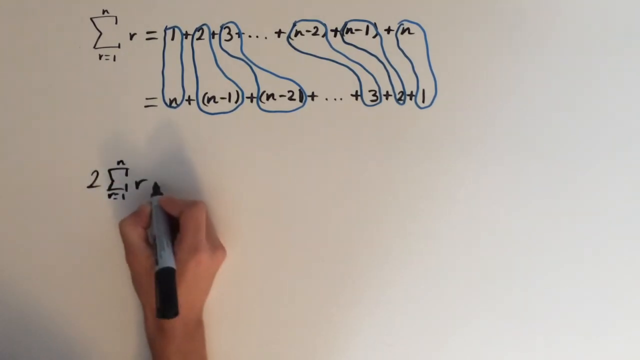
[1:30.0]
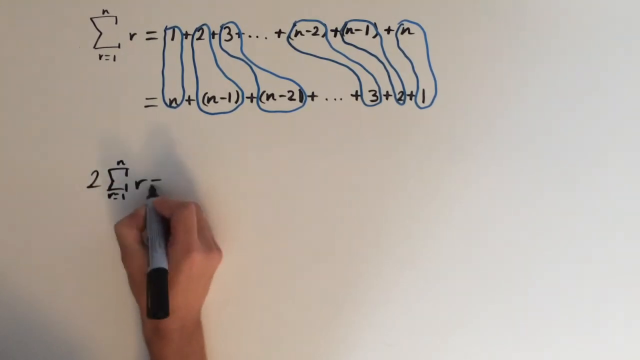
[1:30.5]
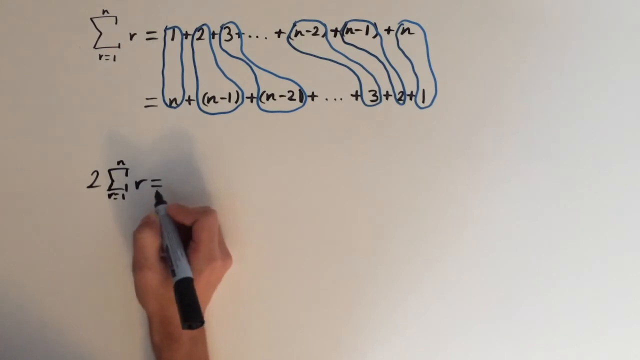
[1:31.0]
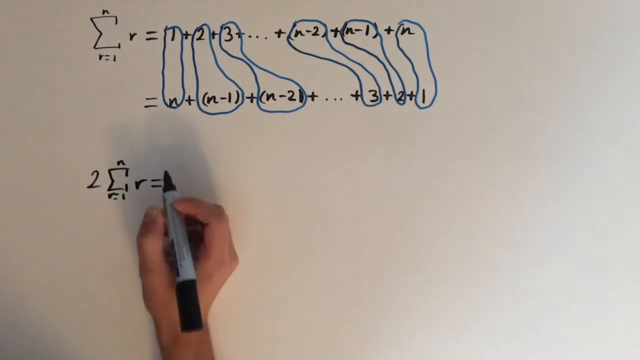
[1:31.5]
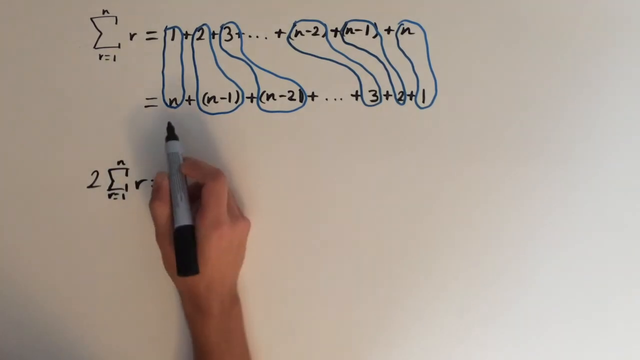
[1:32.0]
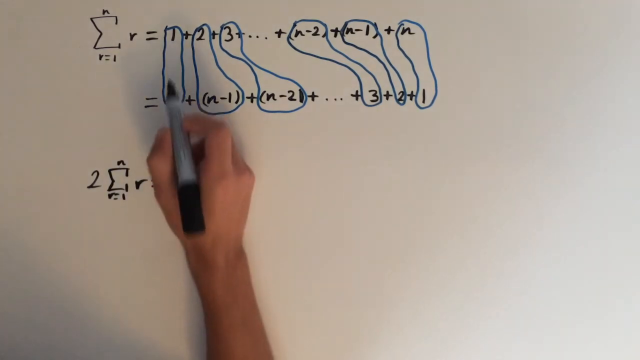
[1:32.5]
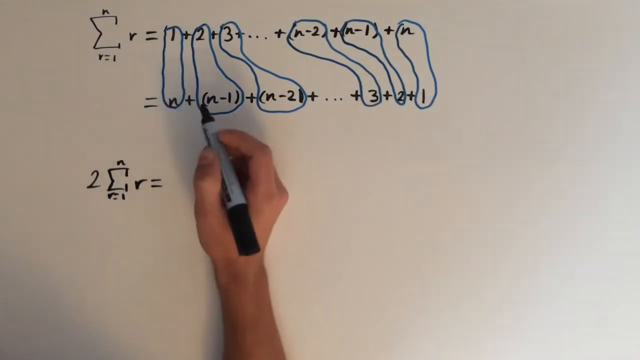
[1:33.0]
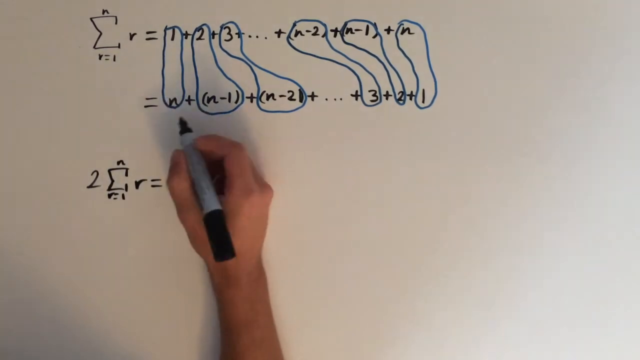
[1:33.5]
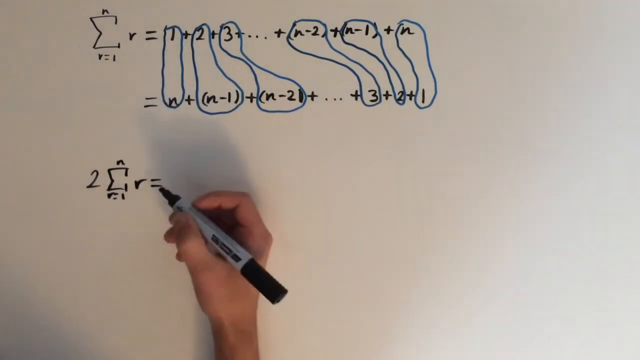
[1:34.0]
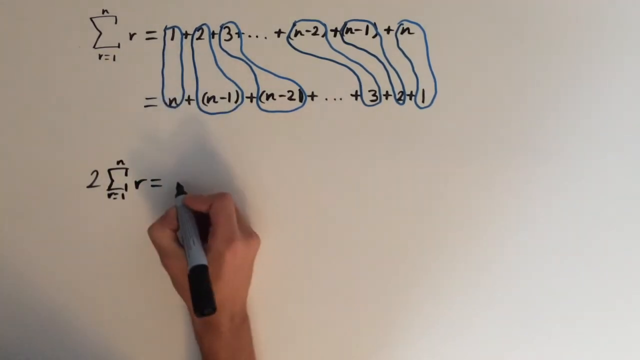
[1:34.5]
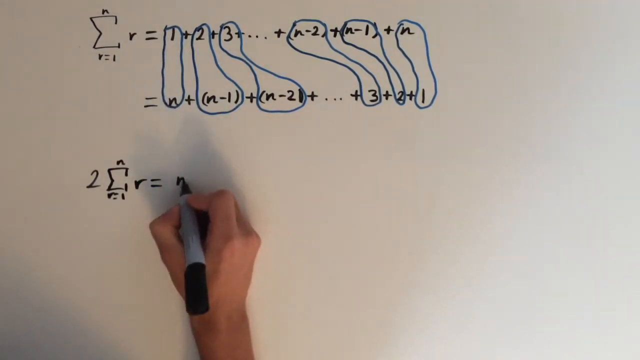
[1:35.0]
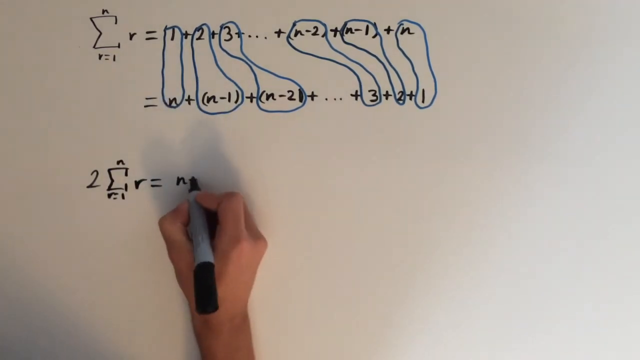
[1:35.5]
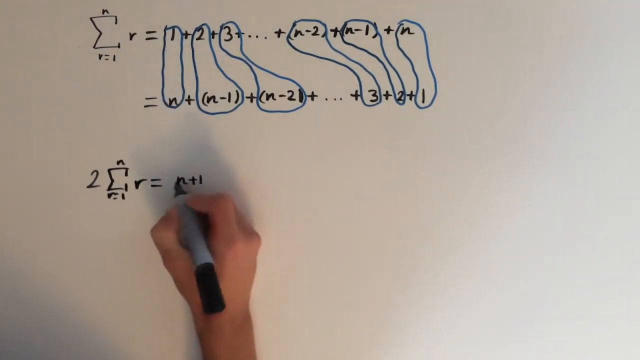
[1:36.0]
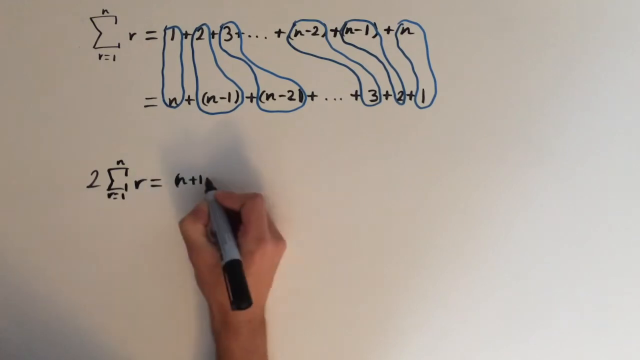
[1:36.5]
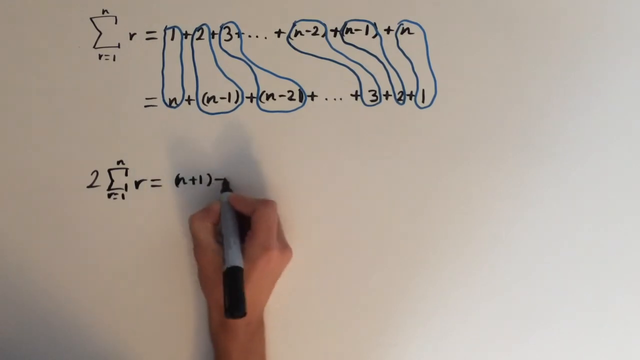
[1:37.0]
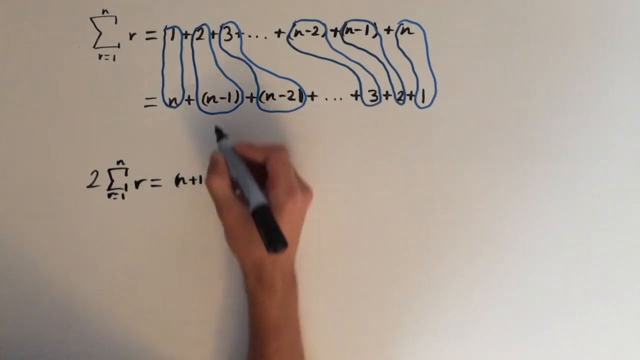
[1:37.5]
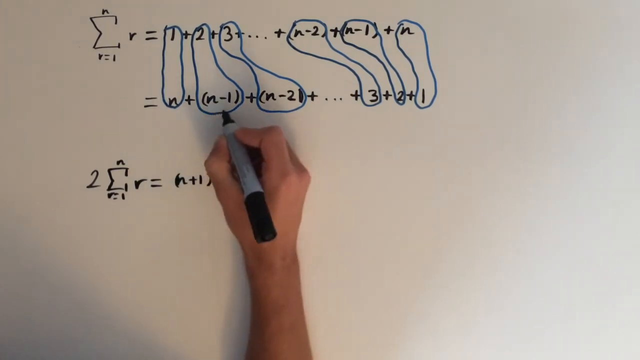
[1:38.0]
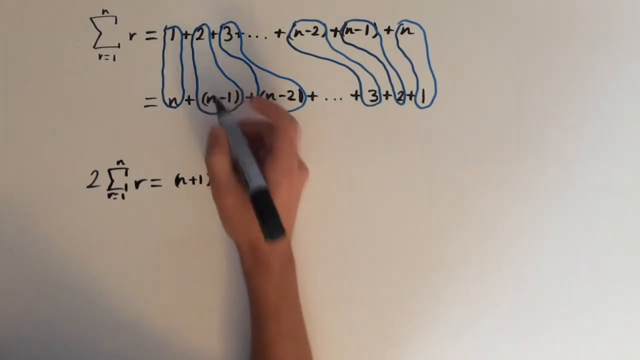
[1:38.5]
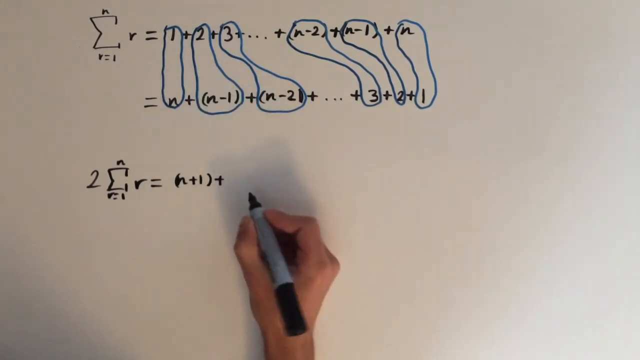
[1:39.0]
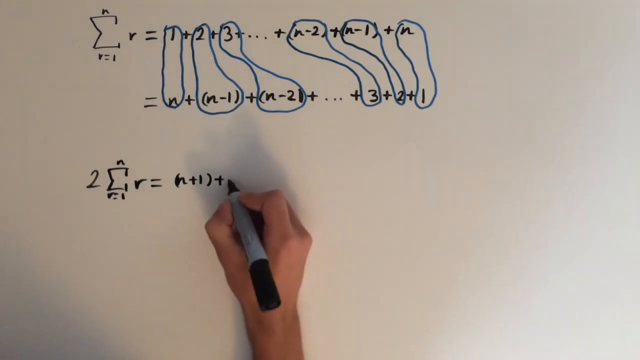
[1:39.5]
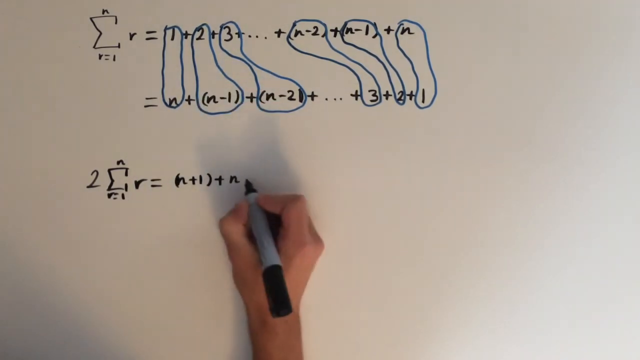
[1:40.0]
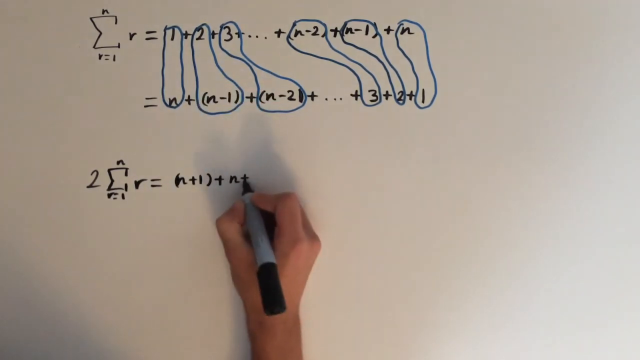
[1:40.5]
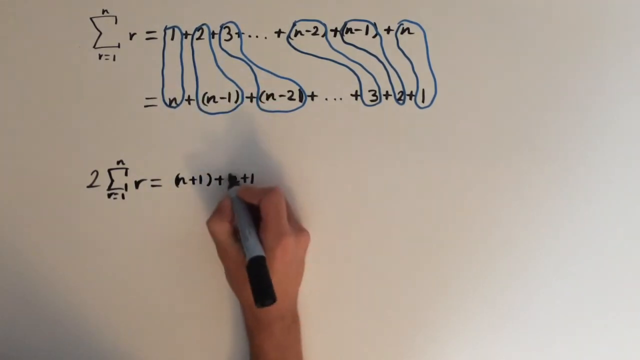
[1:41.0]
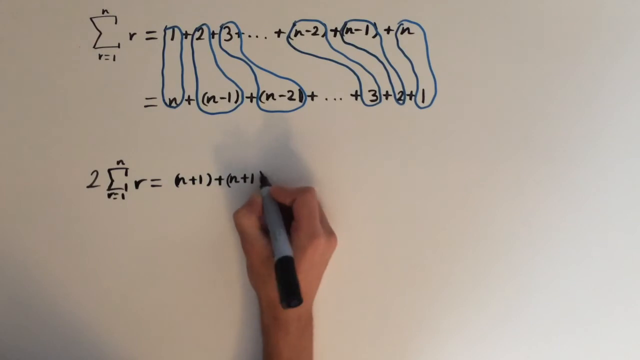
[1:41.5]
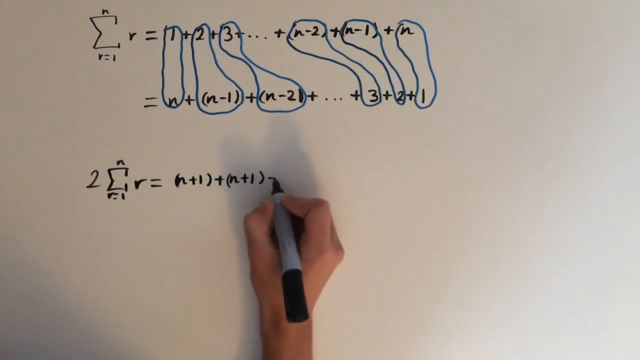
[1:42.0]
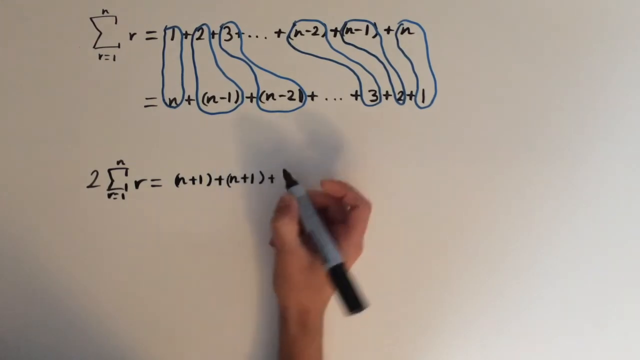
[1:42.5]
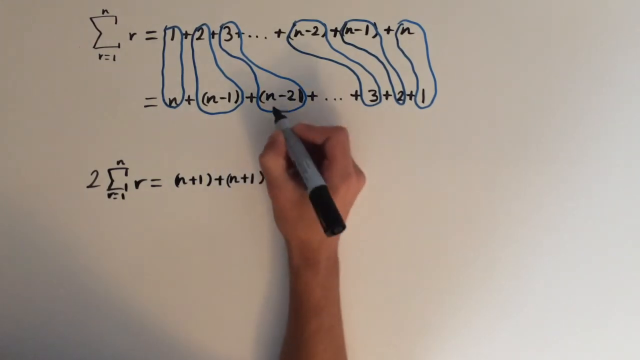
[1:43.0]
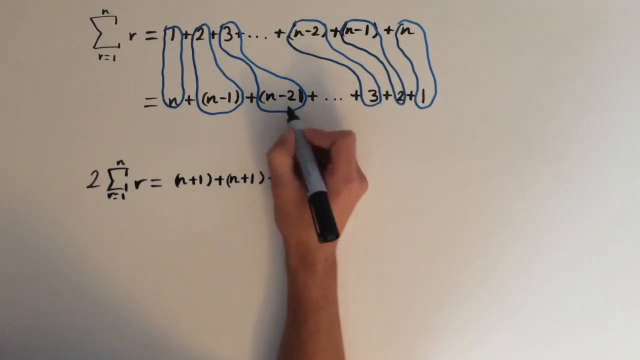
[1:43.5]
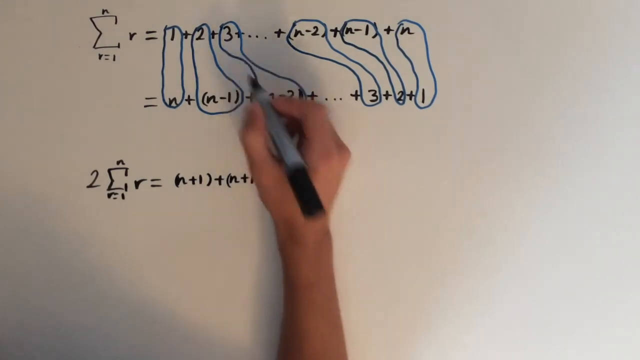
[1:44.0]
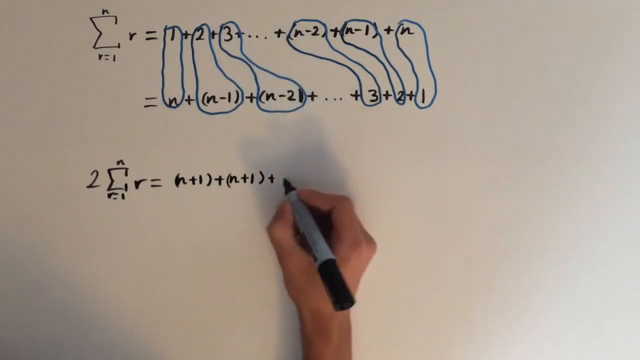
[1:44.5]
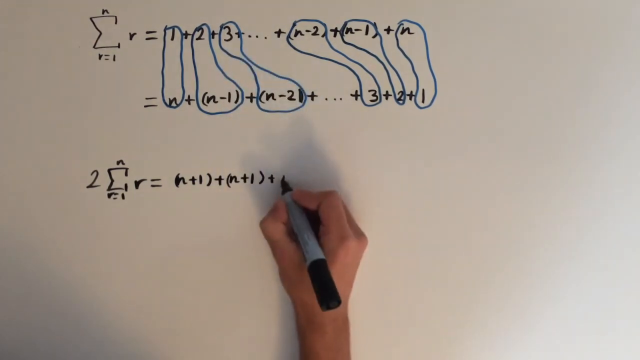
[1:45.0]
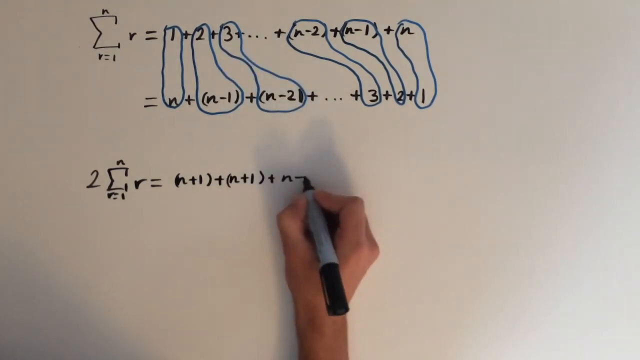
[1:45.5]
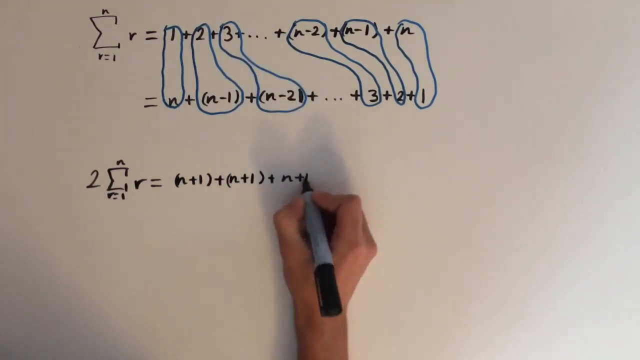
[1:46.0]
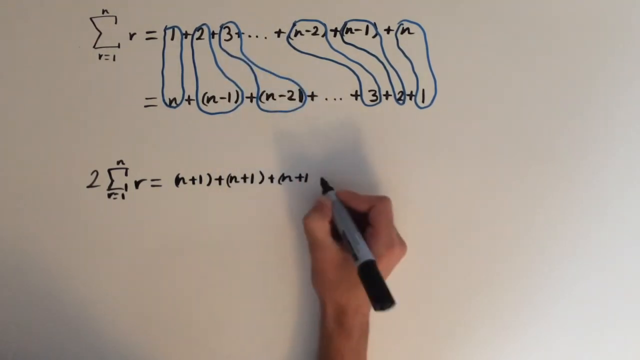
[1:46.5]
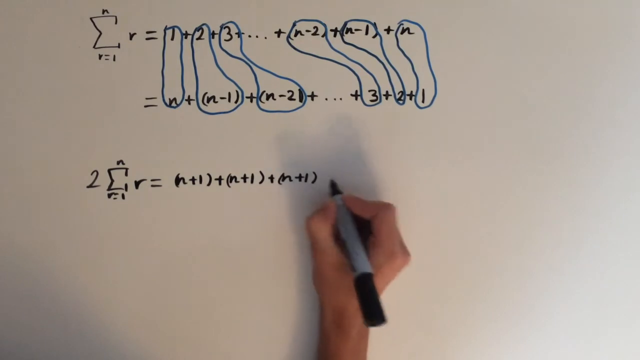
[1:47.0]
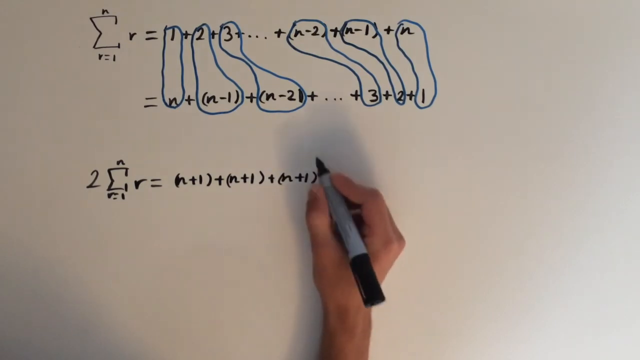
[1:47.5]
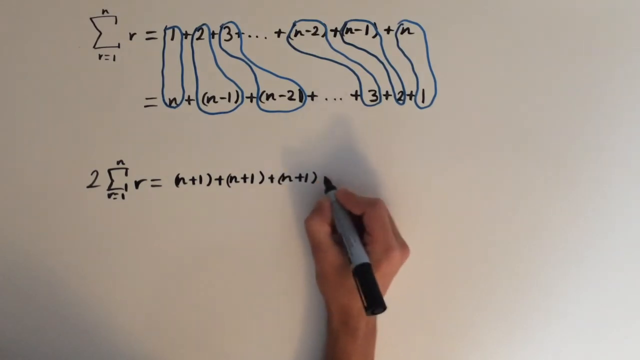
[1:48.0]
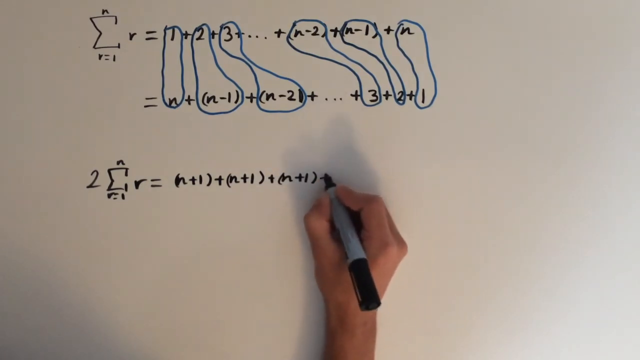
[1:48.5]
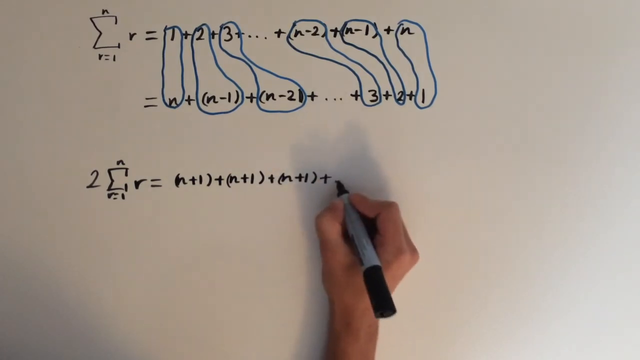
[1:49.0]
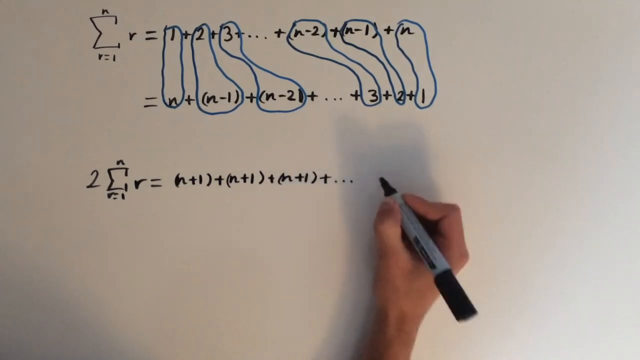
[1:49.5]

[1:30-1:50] The host, with a white hand, writes the equation in a different, factorised form: the sum of r, for r = 1 to n, equals (n + 1) + (n + 1) + …. He writes with a black marker that has a silver-grey body, a black lid and a black tip. His hands are small and of normal size, neither fat nor skinny. His handwriting on the whiteboard gets progressively worse. Some of the equations, numbers and letters are circled in blue marker.